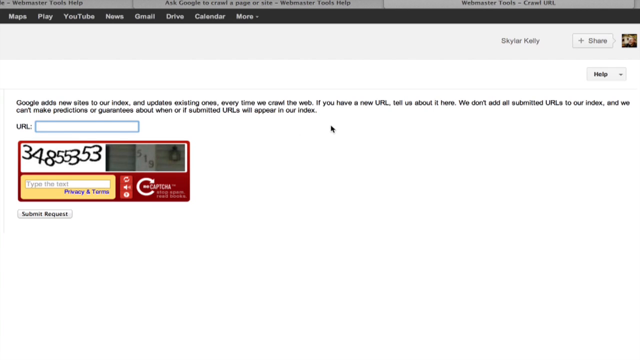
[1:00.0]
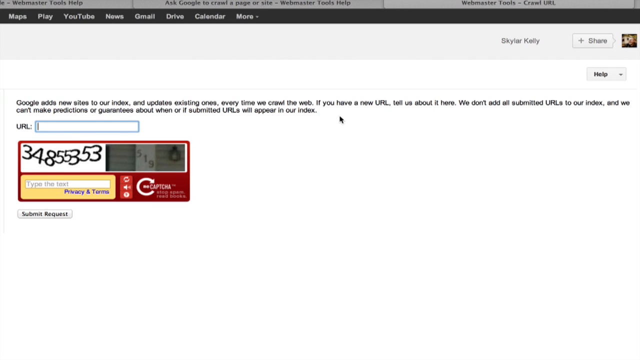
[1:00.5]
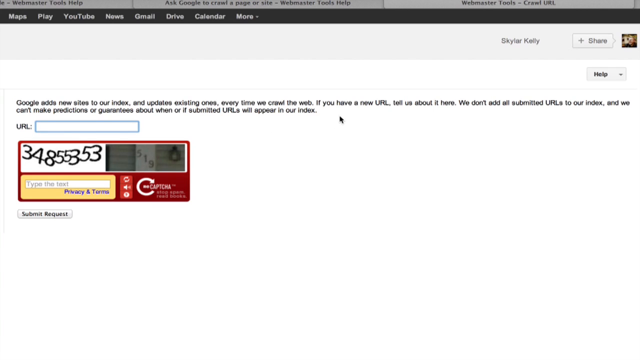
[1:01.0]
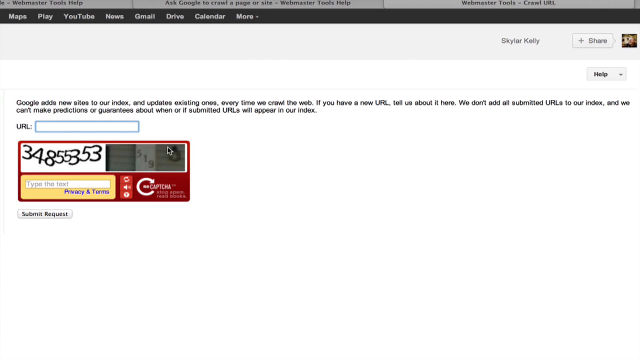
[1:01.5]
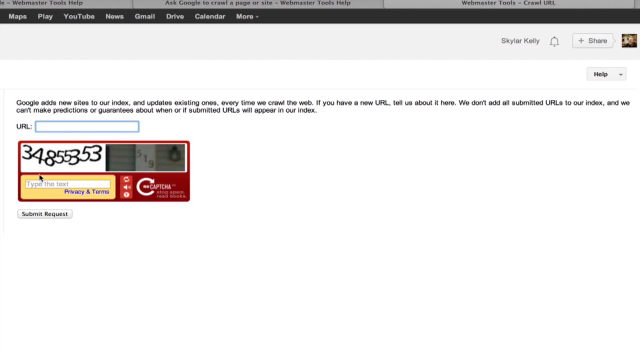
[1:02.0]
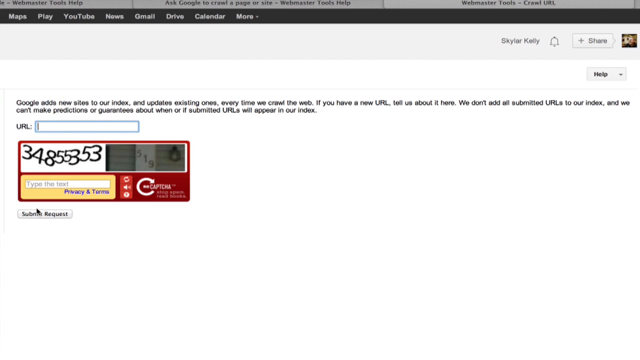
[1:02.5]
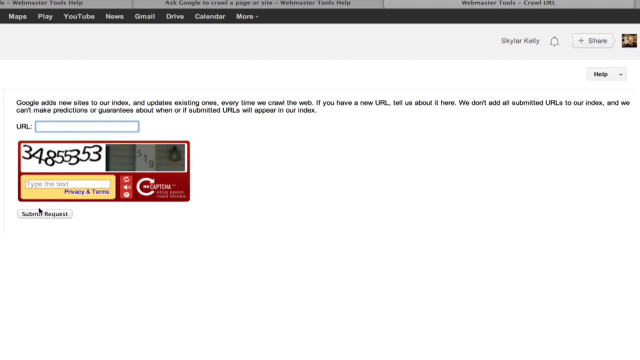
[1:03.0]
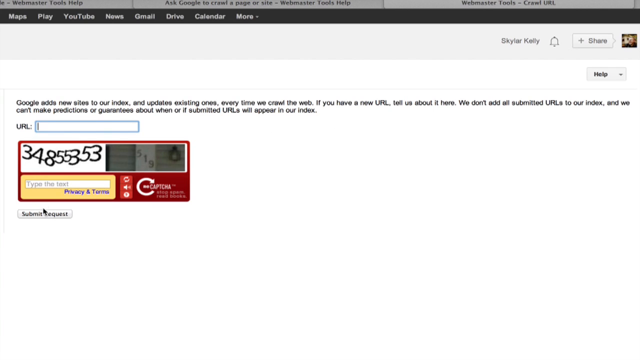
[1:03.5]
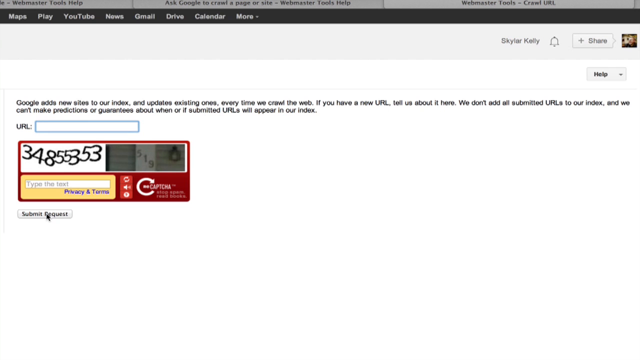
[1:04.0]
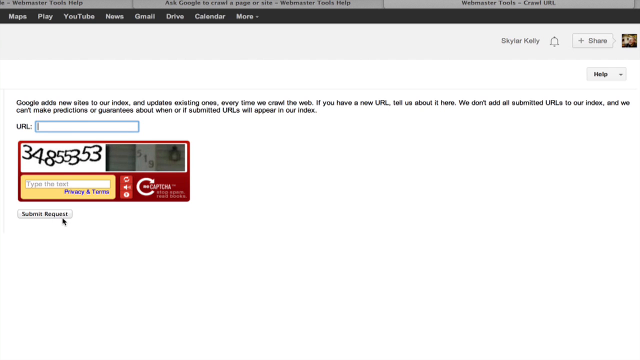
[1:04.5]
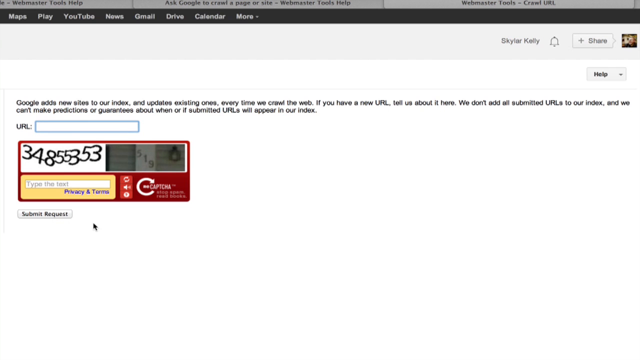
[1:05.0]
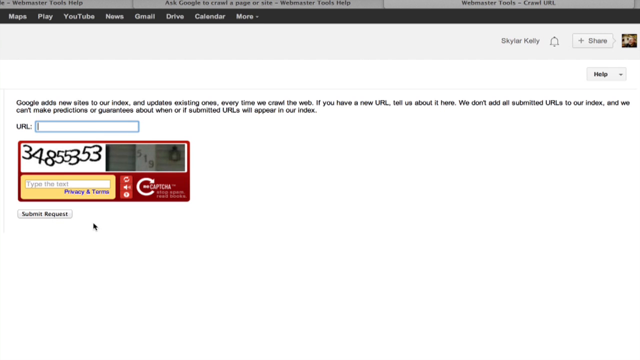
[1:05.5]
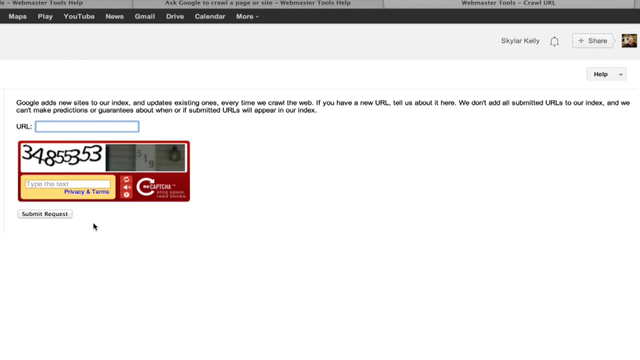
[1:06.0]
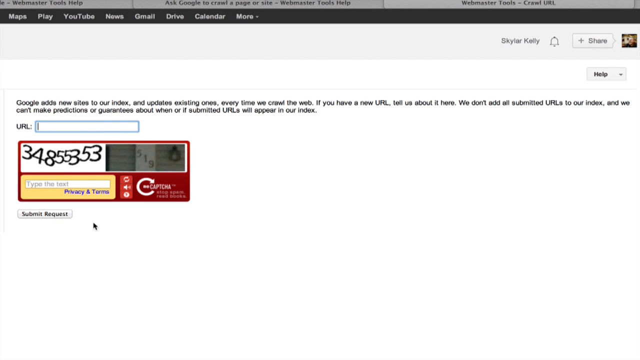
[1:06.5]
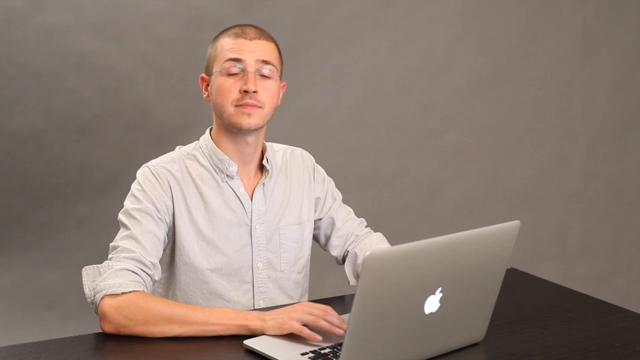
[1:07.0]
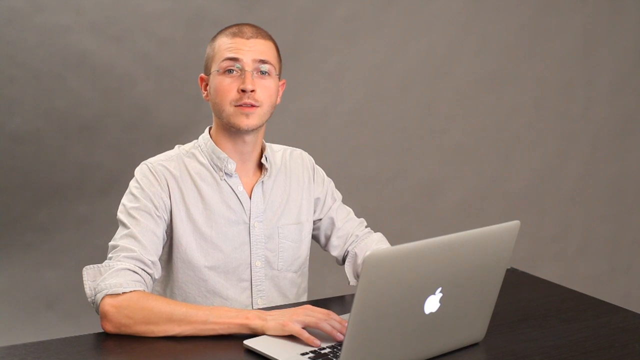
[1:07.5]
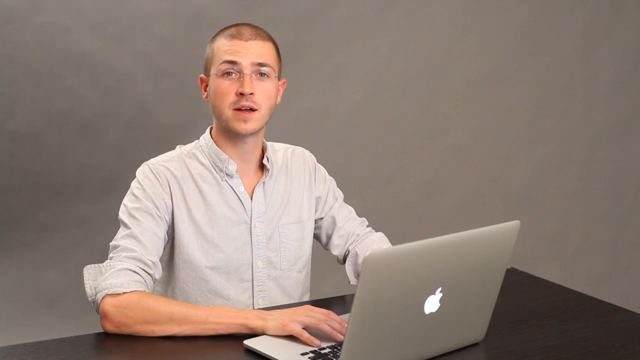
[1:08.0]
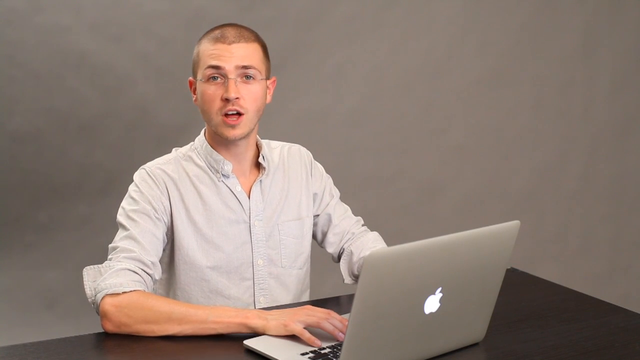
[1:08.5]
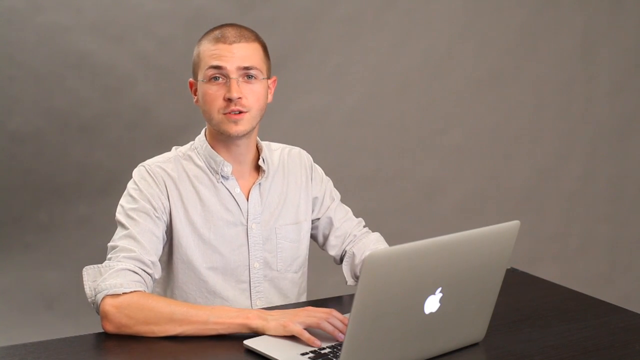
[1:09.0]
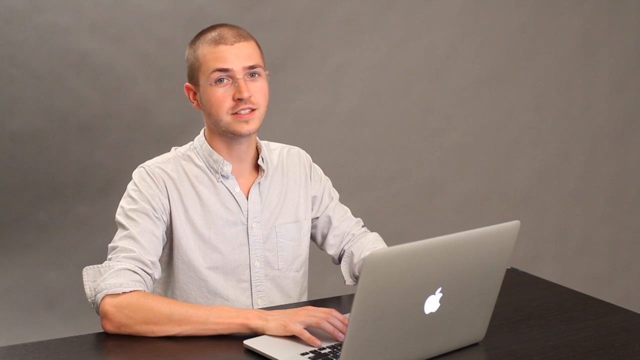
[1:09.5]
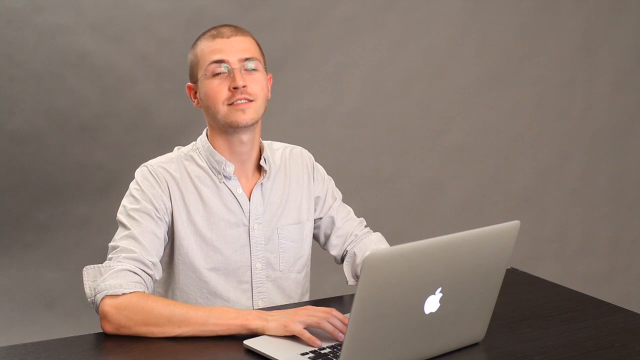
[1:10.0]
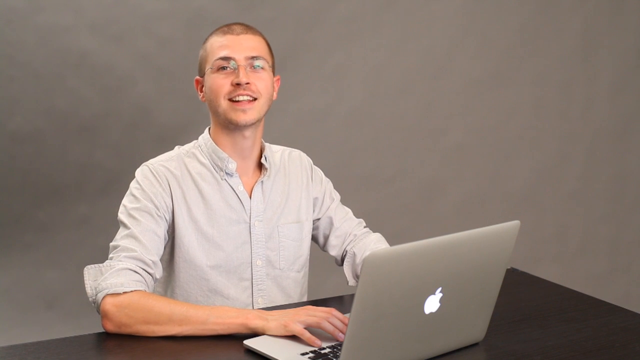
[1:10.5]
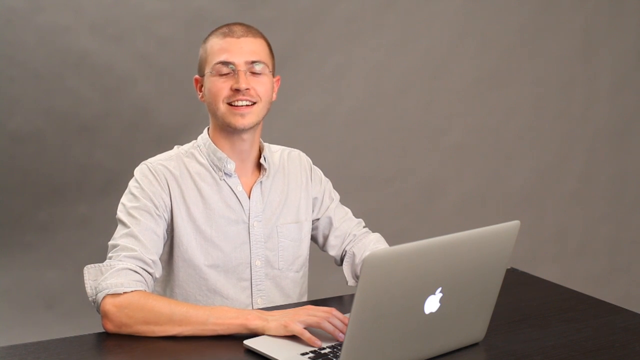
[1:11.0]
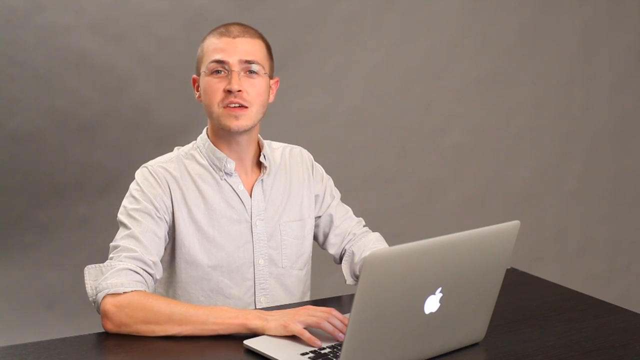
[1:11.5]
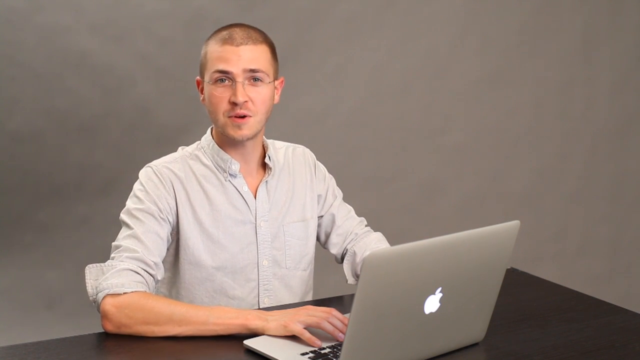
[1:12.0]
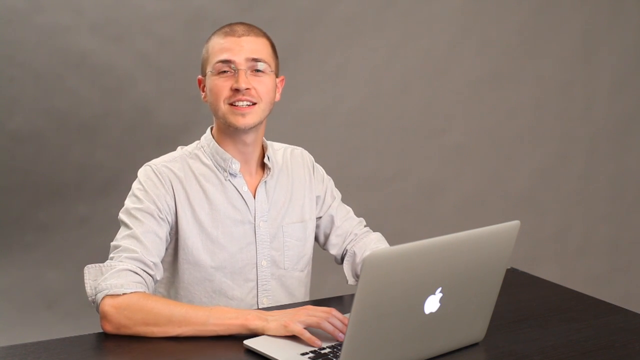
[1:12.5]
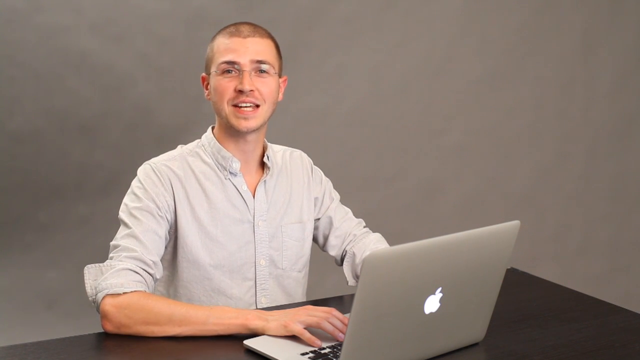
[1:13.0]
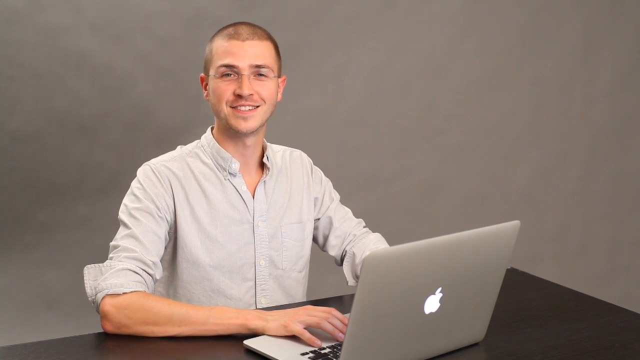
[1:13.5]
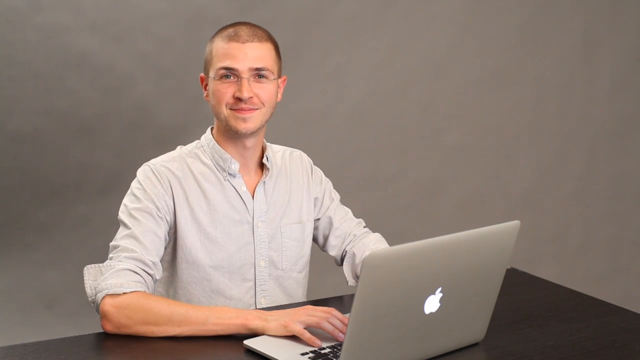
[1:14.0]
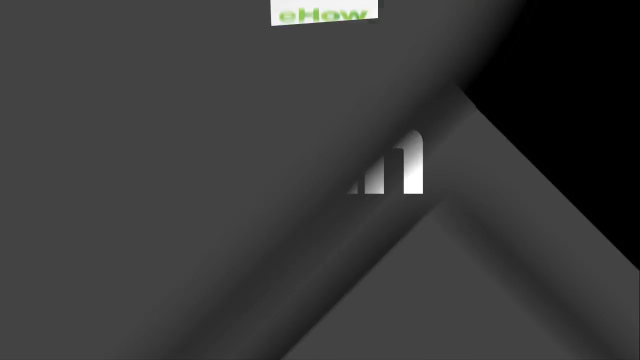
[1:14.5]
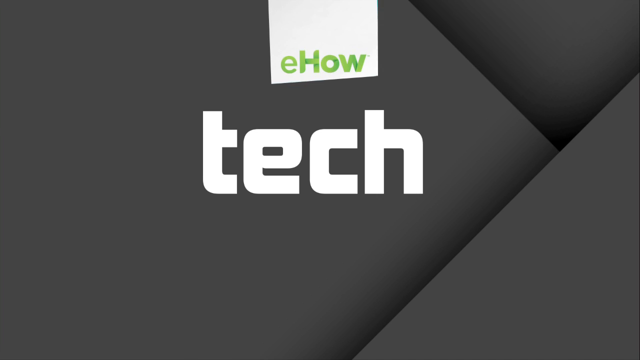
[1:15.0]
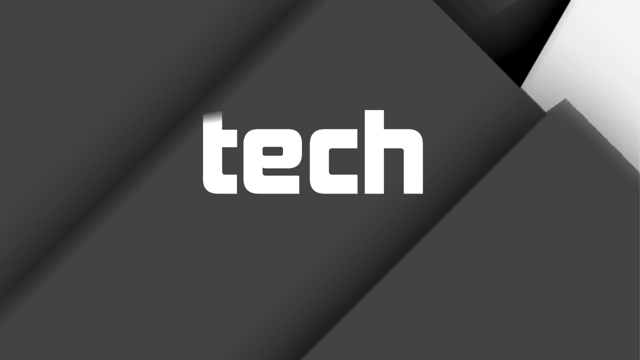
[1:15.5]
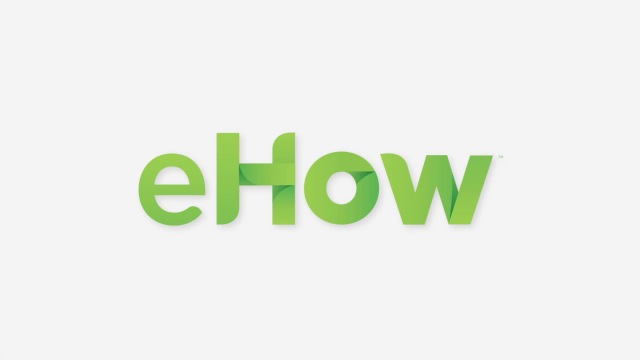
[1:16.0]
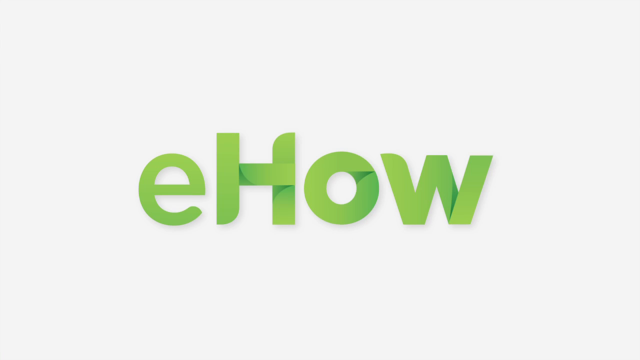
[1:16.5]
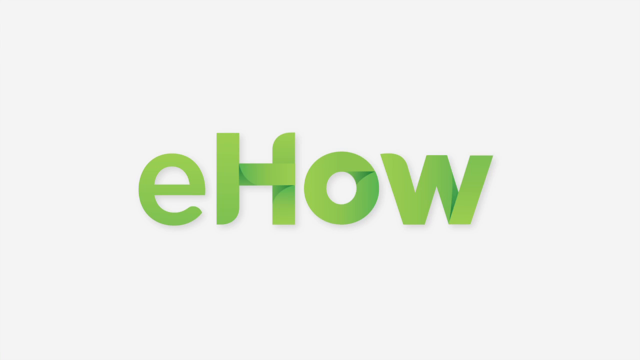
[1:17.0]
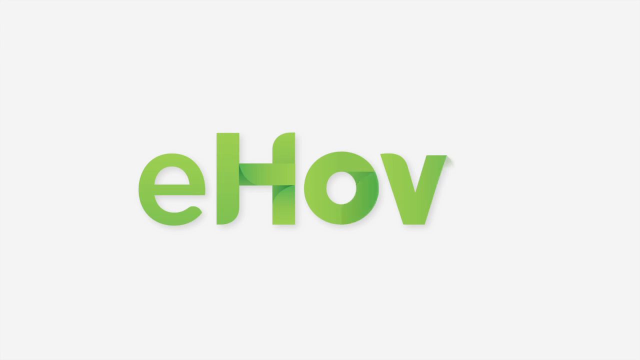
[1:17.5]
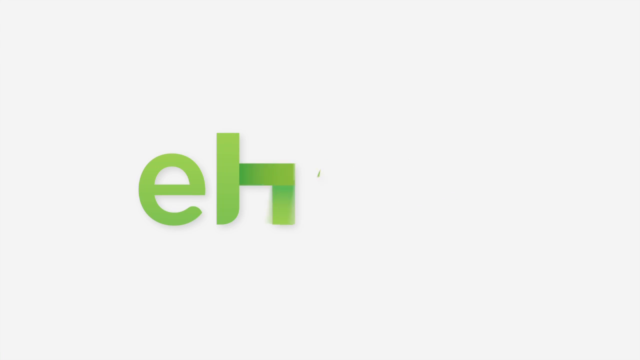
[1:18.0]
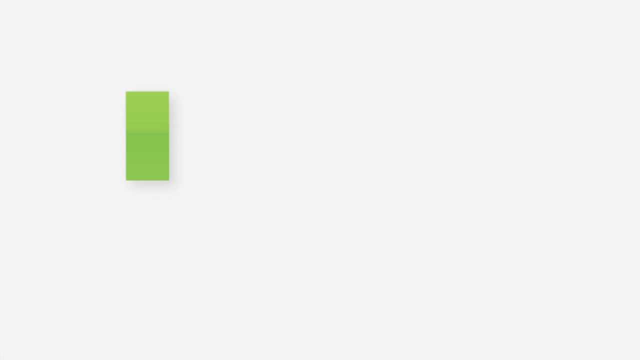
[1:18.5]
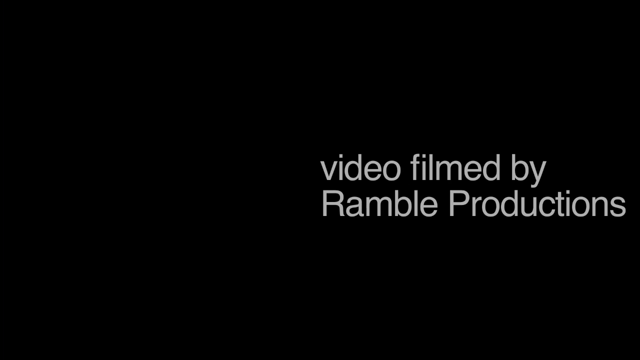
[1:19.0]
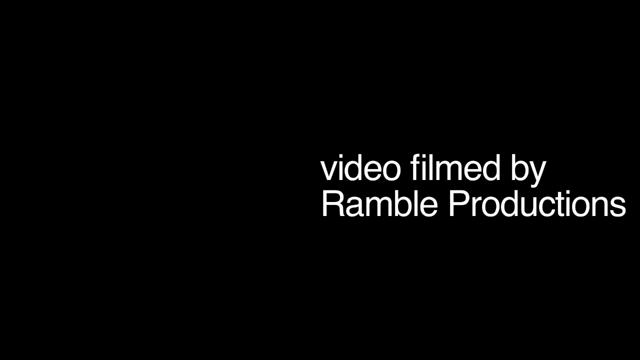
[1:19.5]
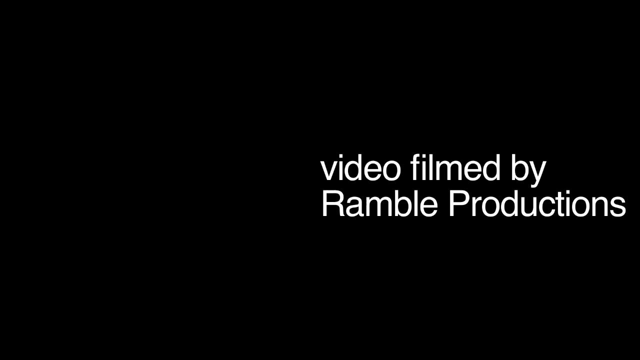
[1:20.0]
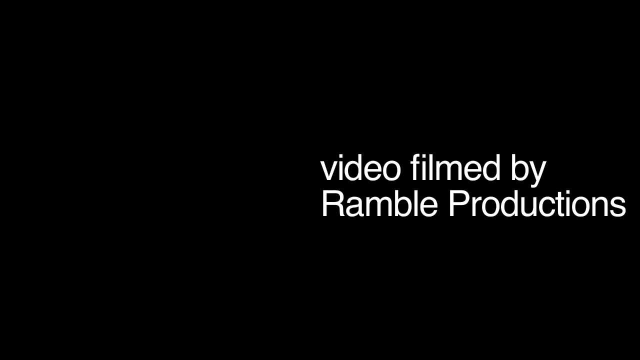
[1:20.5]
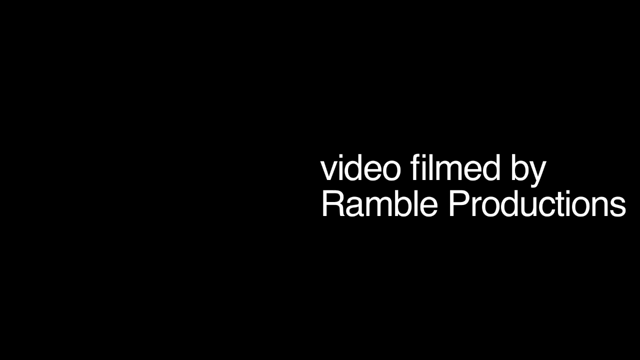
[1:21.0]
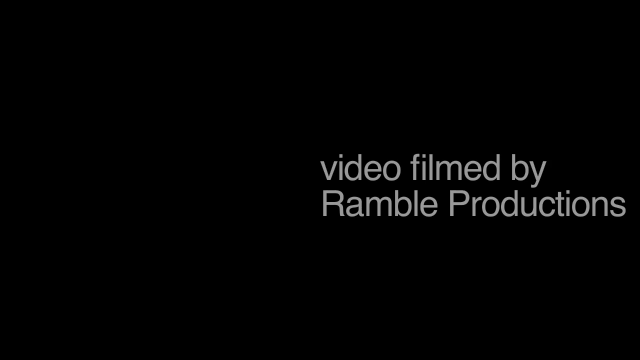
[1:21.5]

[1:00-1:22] At the top of the screen are the three tabs, including "Webmaster Tools, crawl URL" at the end. Below is a black horizontal bar with options from the left: "maps", "play", "YouTube", "news", "Gmail", "drive", "calendar" and "more" with a dropdown arrow to its right. Below that is a thicker, faint gray bar that is empty until its last quarter, which holds the text "Skyler Kelly", a bell symbol, a horizontal battery-type shape with "+share", and next to that a square containing a photo of somebody. Next is a white horizontal bar with a faint gray line underneath, with a Help button and a dropdown arrow at the far right. The main body reads "Google adds new sites to our index and updates existing ones every time we crawl the web. If you have a new URL, tell us about it here. We don't add all submitted URLs to our index. And we can't make predictions or guarantees about when or if submitted URLs will appear in our index." After a space, a new line reads "URL:" followed by a blue-bordered horizontal bar for entering a URL. Below that is a captcha in a red-bordered box with four sections: the top one shows, in black font on white, odd characters of different sizes and styles reading 3, 4, 8, 5, 5, 3, 5, 3; below it, on a yellow border background, is a box for the user to type the text. Below the box on the right is "privacy and terms", and to its right are captcha details in a red box with a refresh button, a speaker button and an unreadable button below them. Below that is a grayish box with "519" written diagonally down from left to right; the rest of the box cannot be made out.